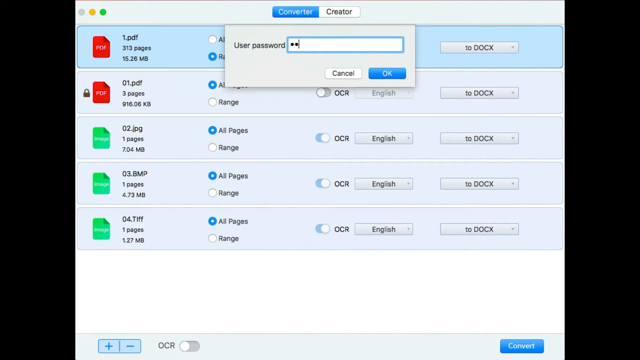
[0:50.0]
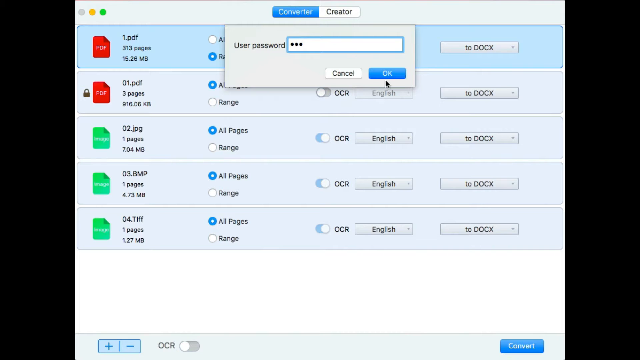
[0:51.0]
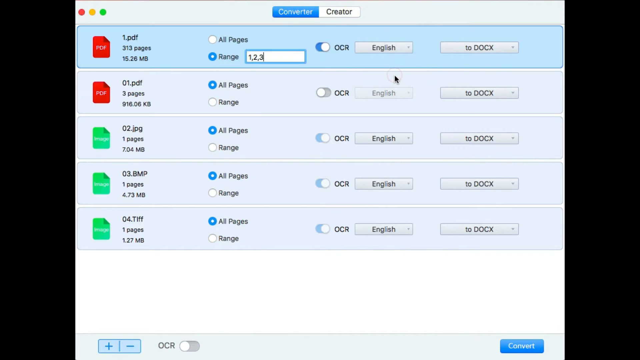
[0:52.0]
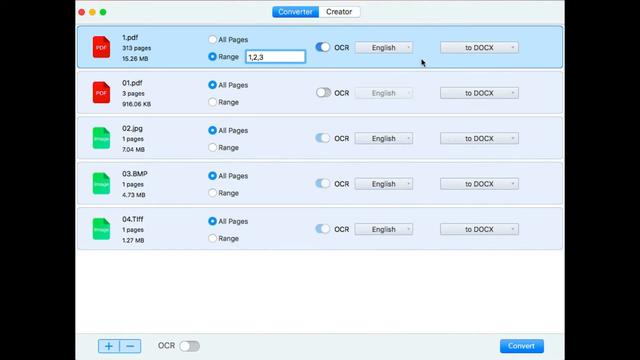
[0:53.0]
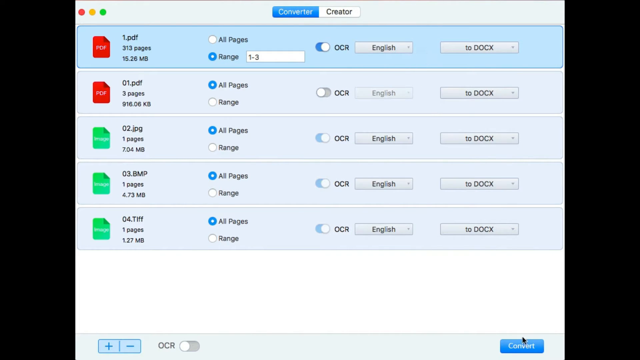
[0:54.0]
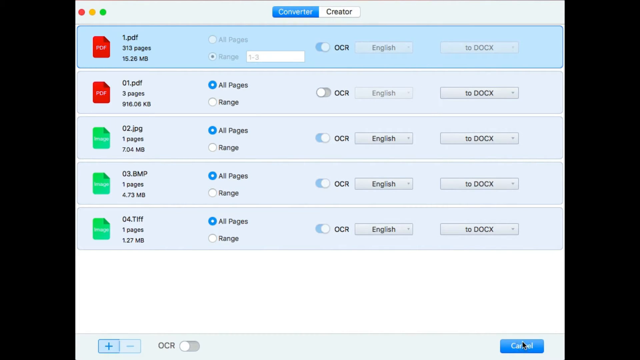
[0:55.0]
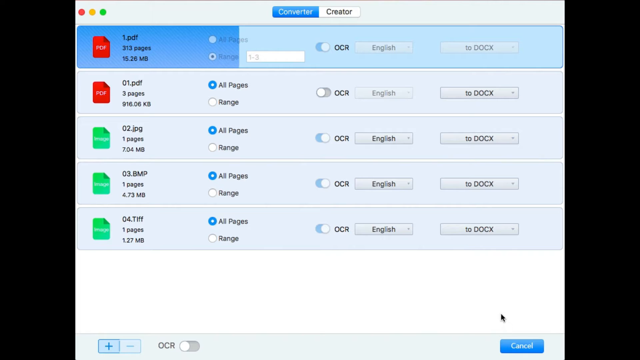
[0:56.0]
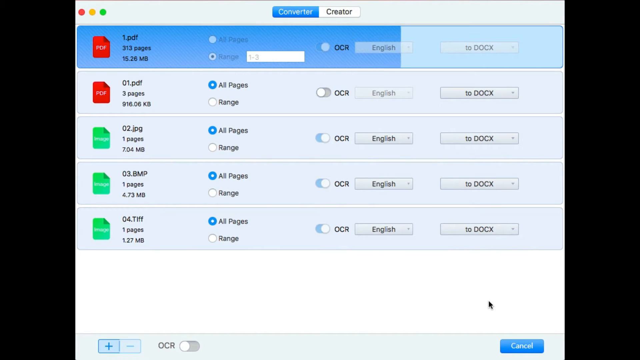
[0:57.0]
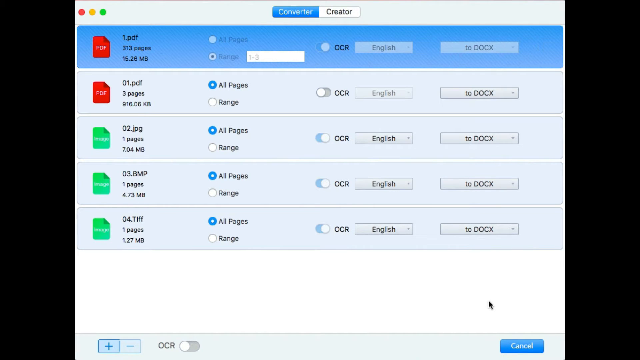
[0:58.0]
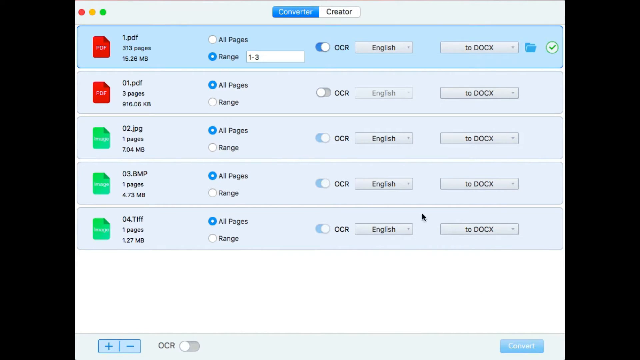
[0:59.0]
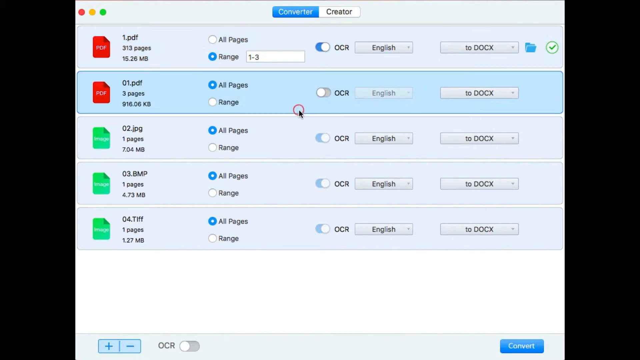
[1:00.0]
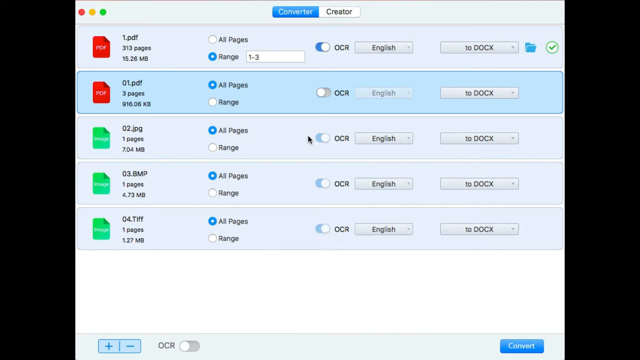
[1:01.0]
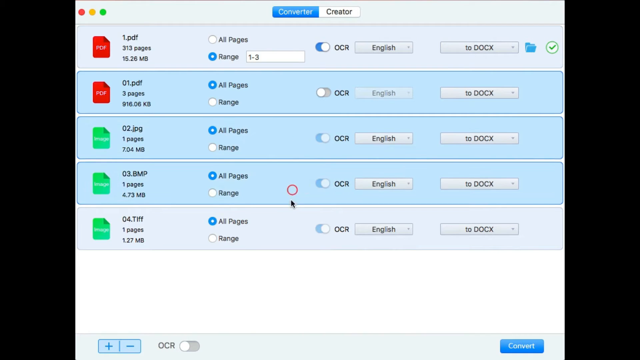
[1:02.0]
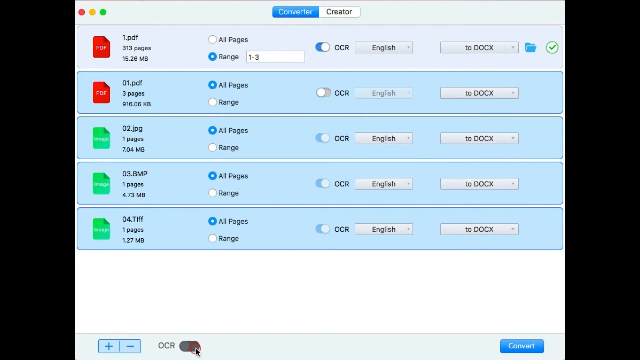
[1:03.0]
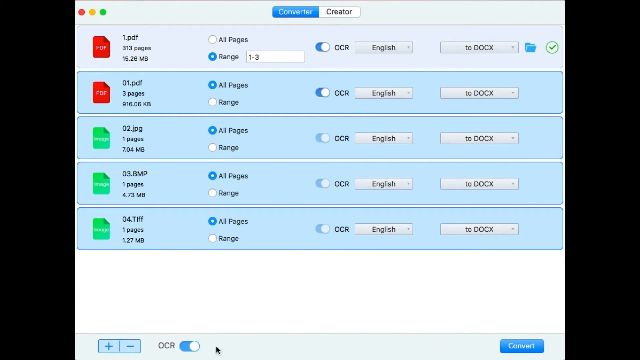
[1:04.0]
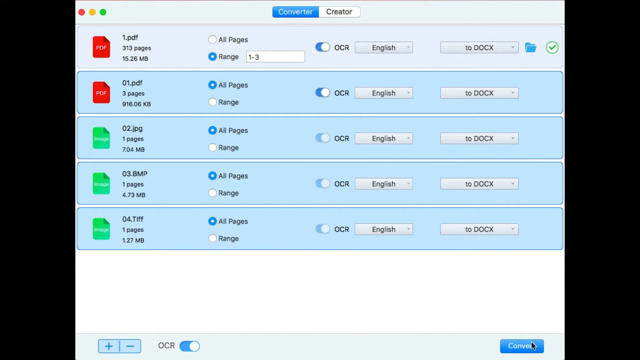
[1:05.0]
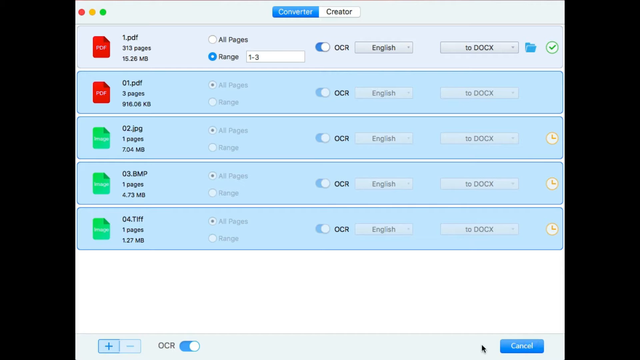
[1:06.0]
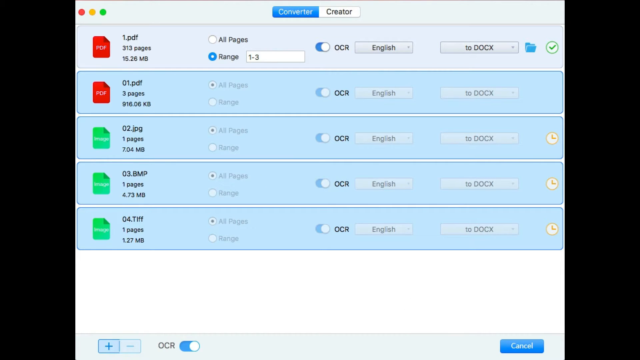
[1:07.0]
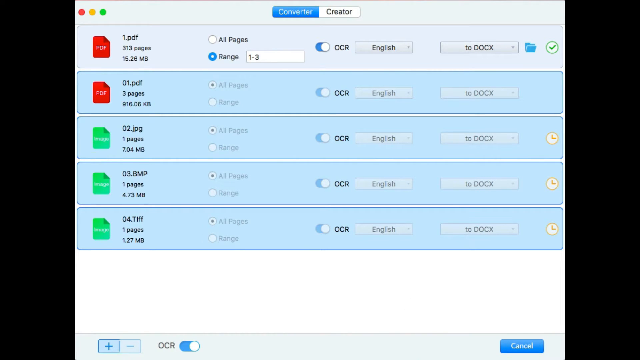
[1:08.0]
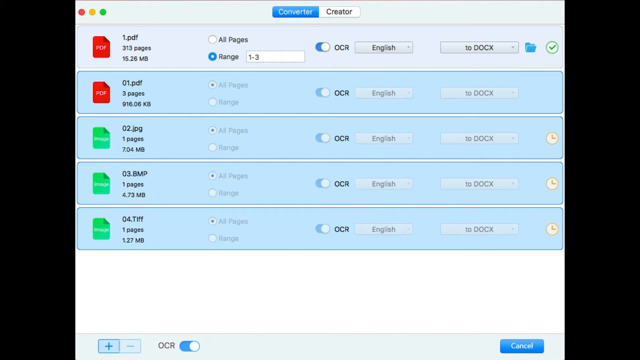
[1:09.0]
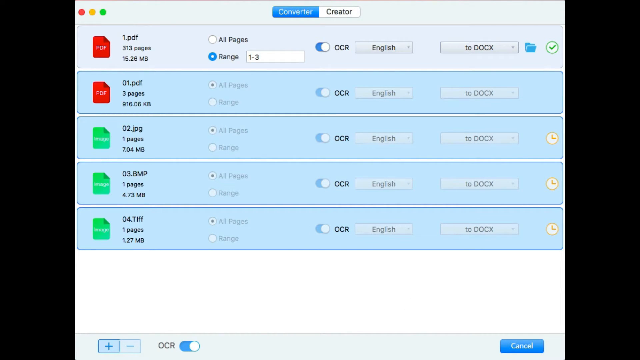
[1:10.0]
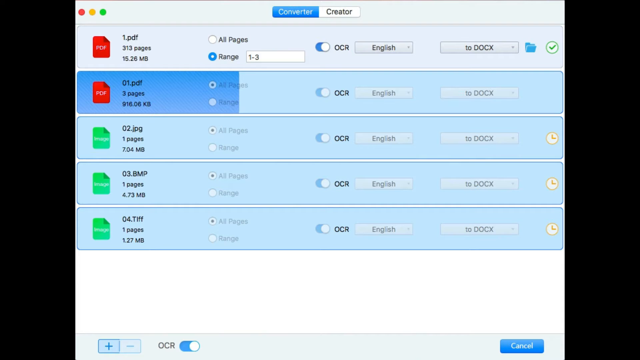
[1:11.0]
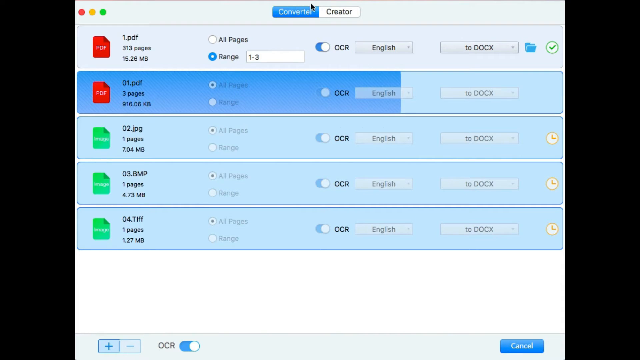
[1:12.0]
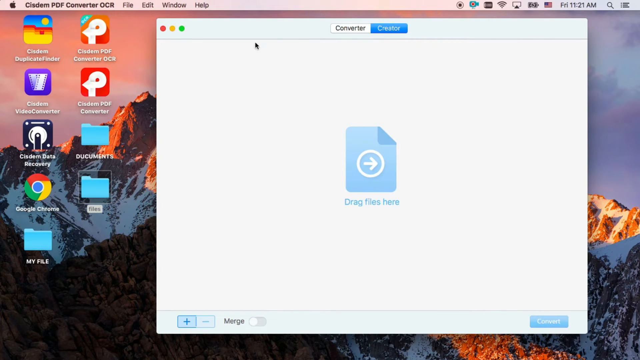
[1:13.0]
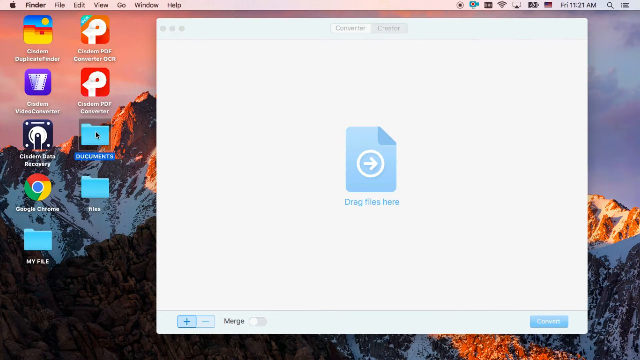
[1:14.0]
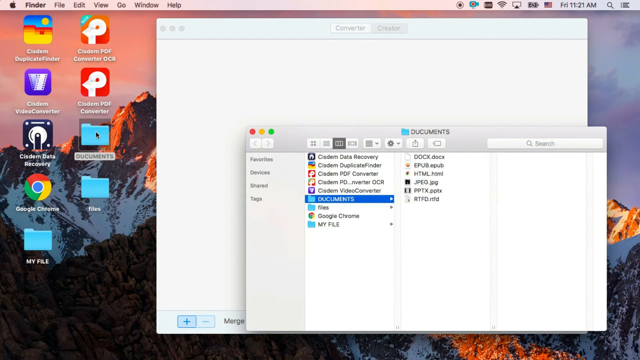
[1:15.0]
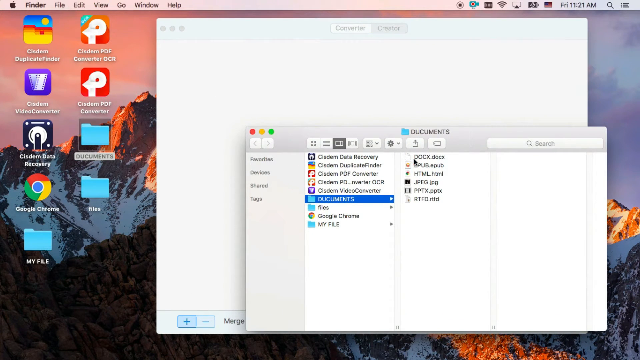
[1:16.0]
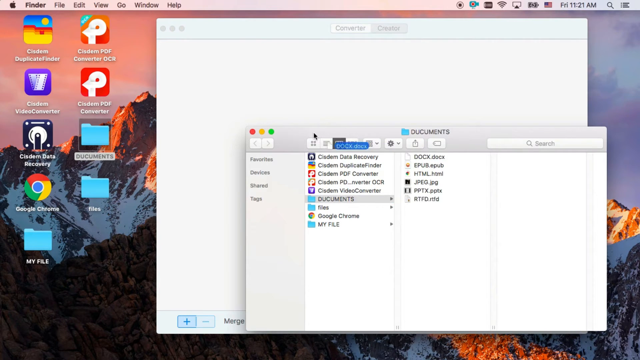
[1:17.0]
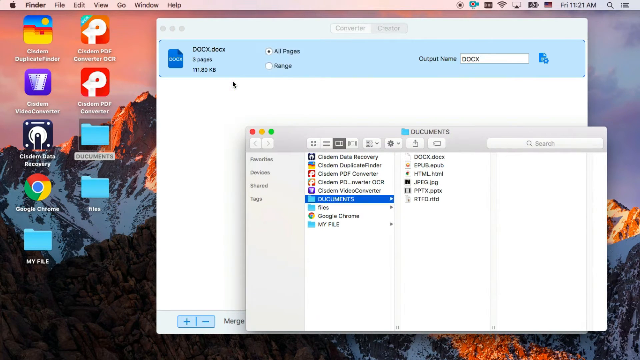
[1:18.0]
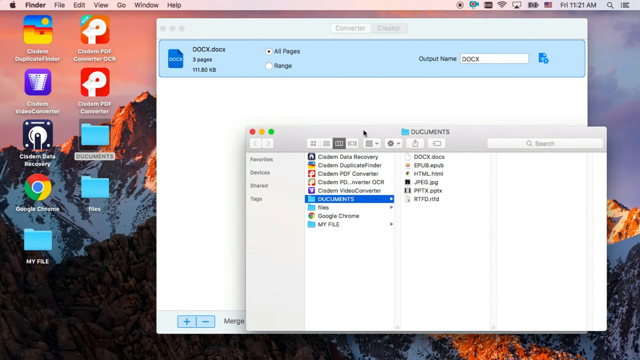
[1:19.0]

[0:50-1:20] A password seems to be entered, and the lock icon disappears from the far left of the second-row PDF, 01.pdf. The first row is selected with the mouse, and a green checkmark appears on the very far right. The second, third, fourth and fifth rows are then selected as well, possibly by holding the CTRL key to select them all at once. A clock icon appears on the right, as if something is processing. Finally, the documents folder is opened in the file browser.